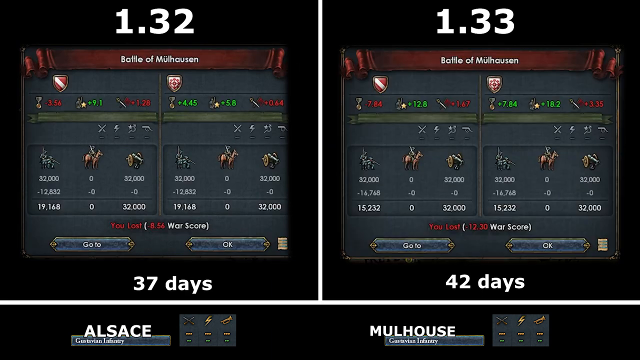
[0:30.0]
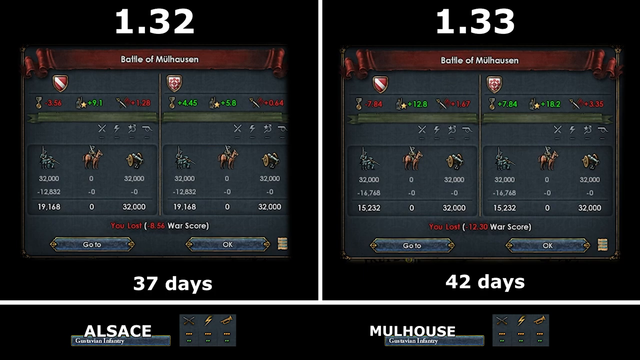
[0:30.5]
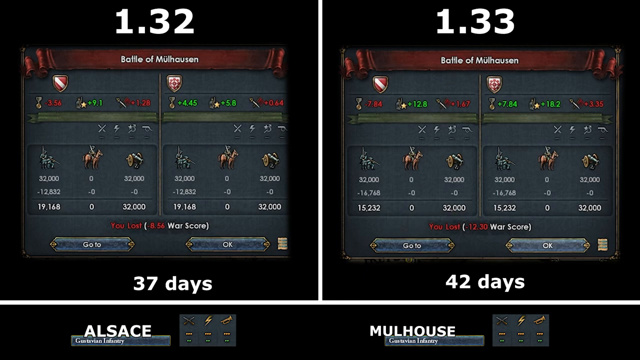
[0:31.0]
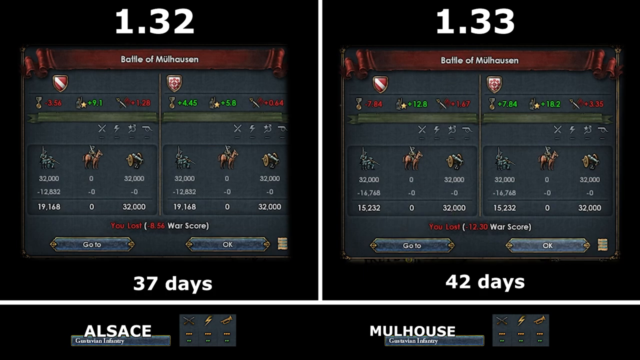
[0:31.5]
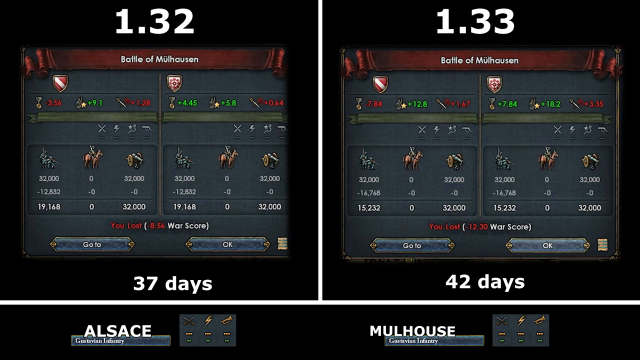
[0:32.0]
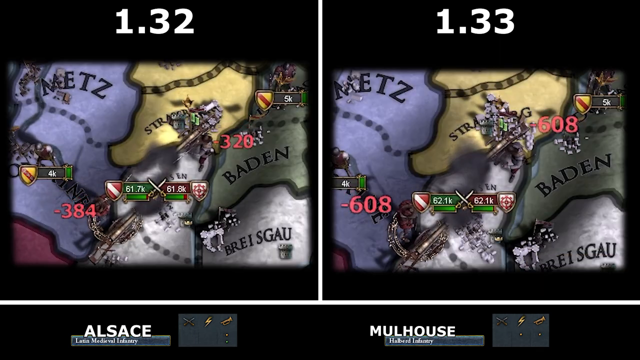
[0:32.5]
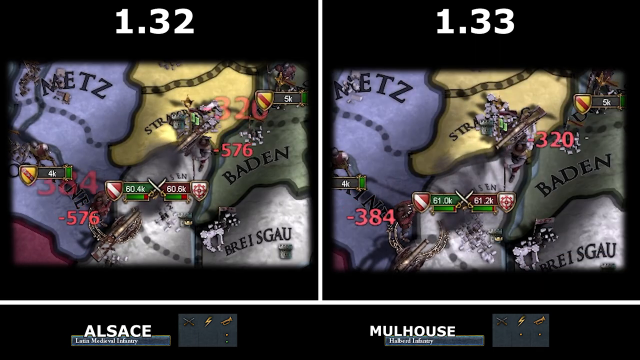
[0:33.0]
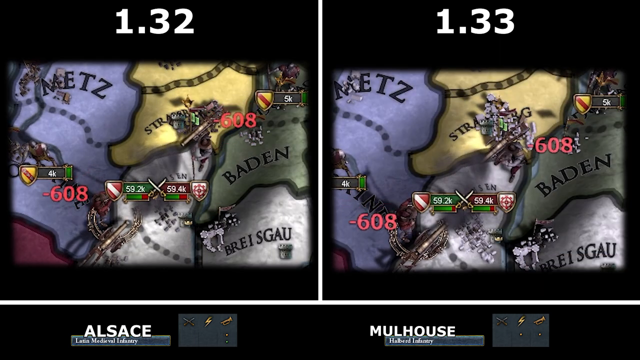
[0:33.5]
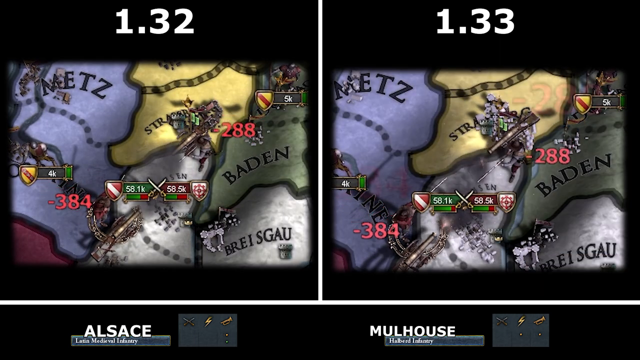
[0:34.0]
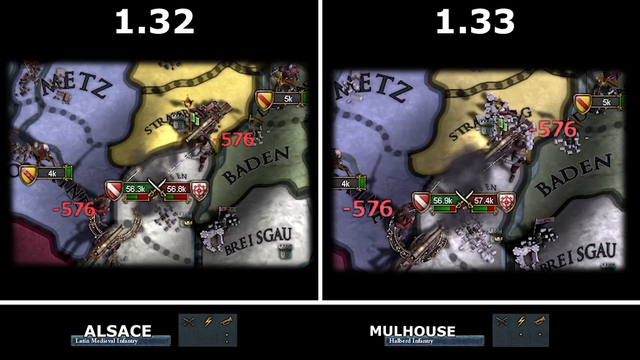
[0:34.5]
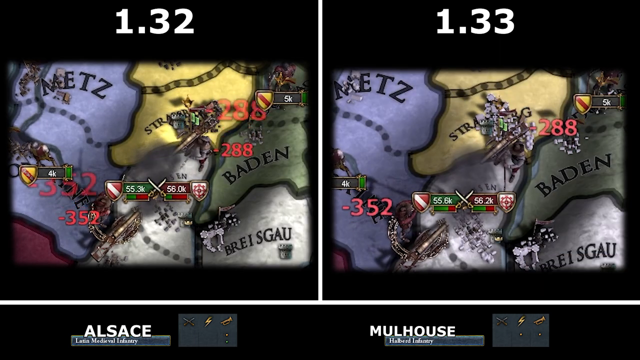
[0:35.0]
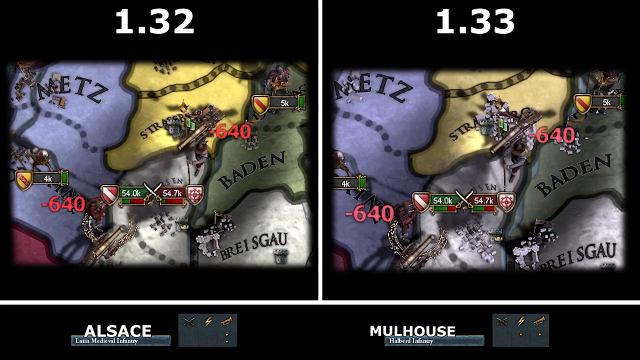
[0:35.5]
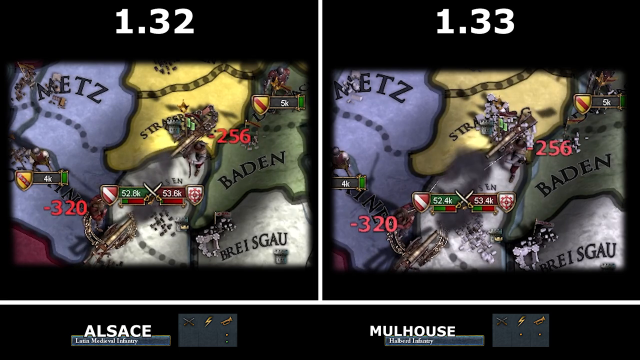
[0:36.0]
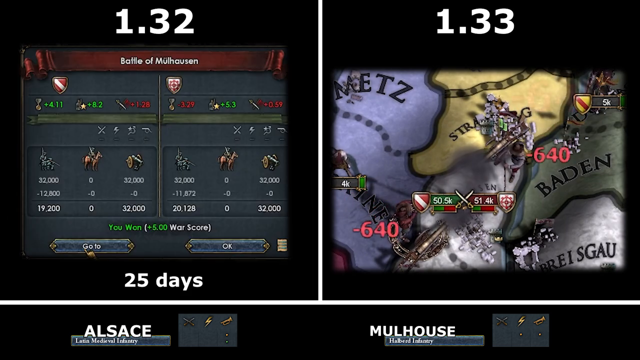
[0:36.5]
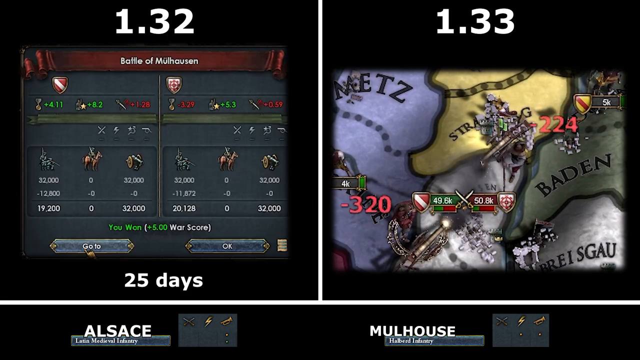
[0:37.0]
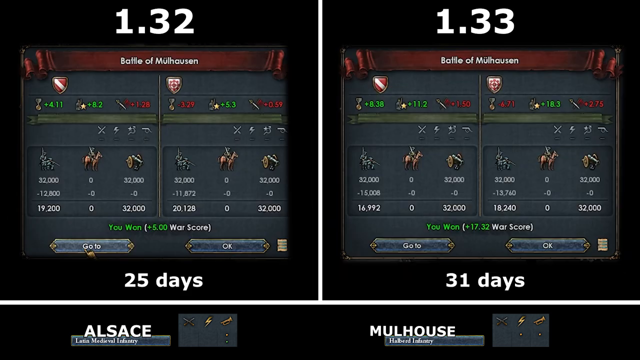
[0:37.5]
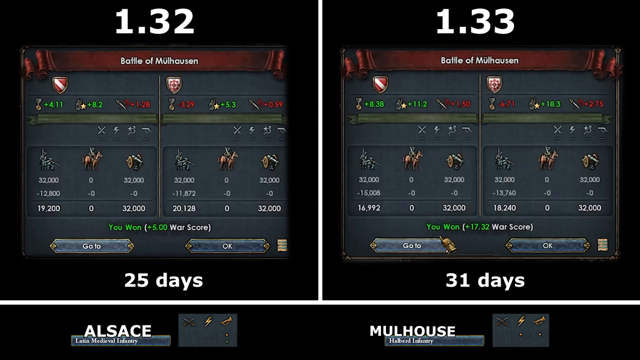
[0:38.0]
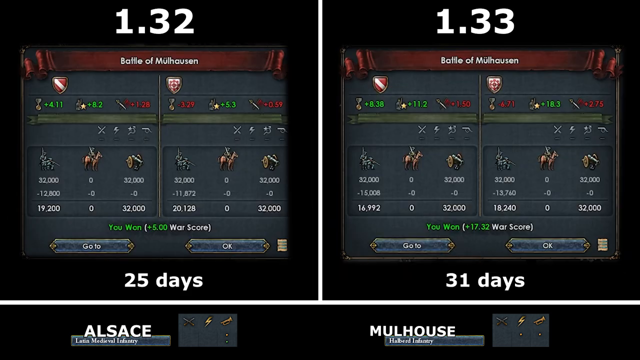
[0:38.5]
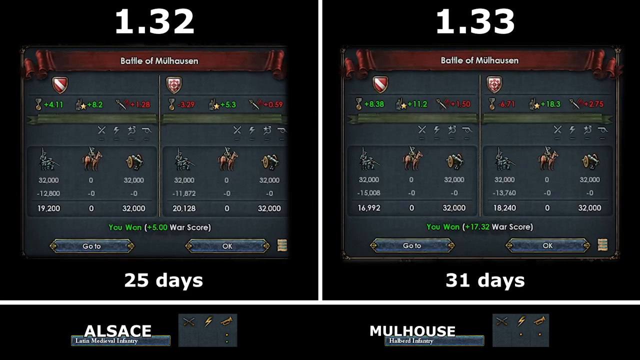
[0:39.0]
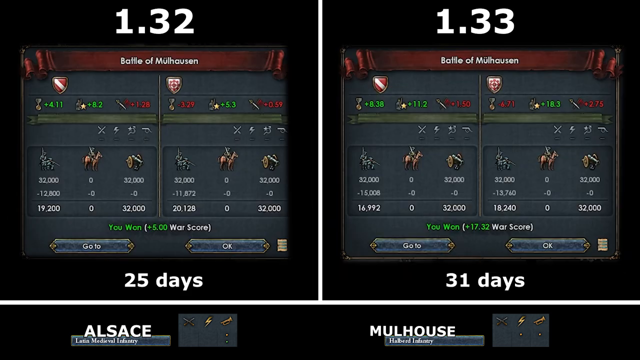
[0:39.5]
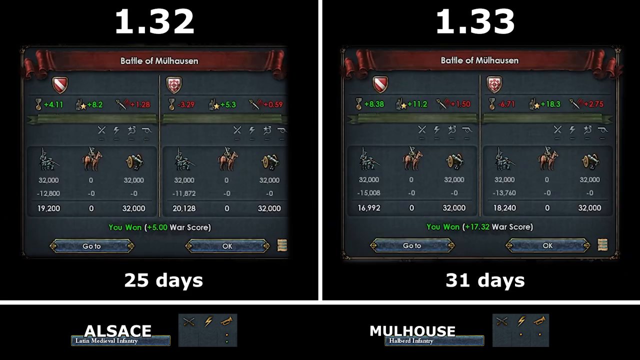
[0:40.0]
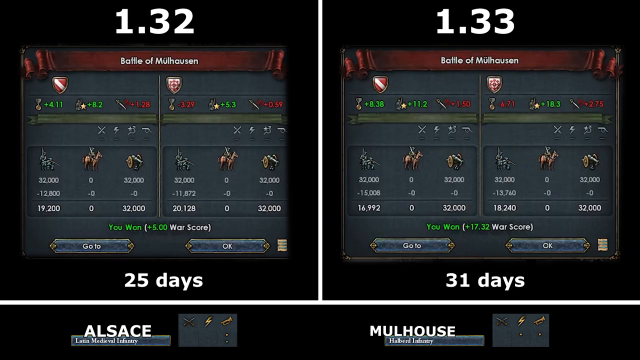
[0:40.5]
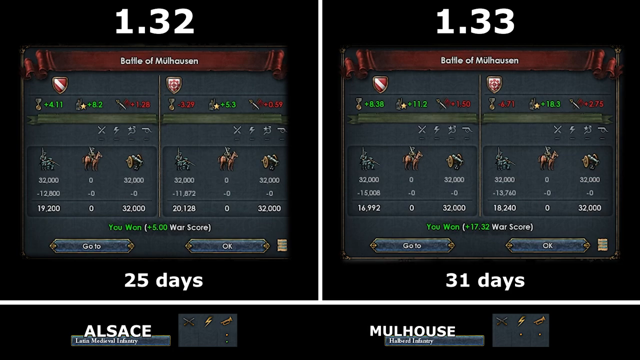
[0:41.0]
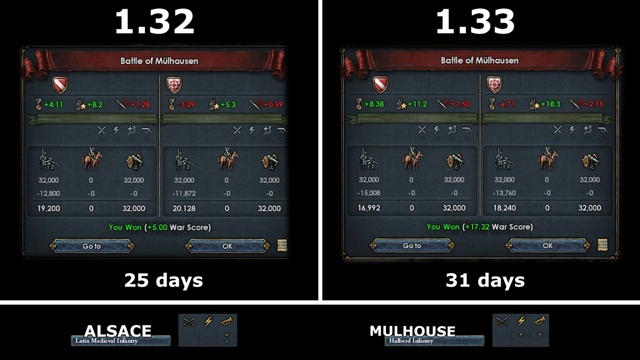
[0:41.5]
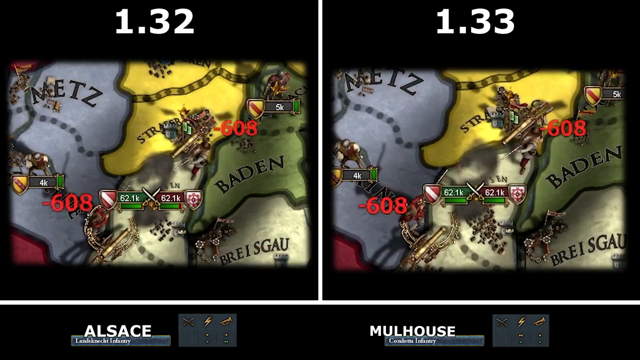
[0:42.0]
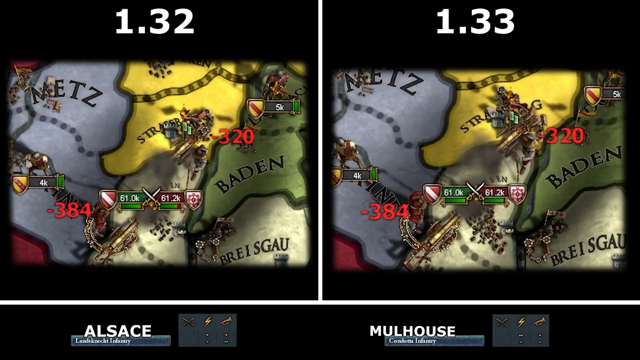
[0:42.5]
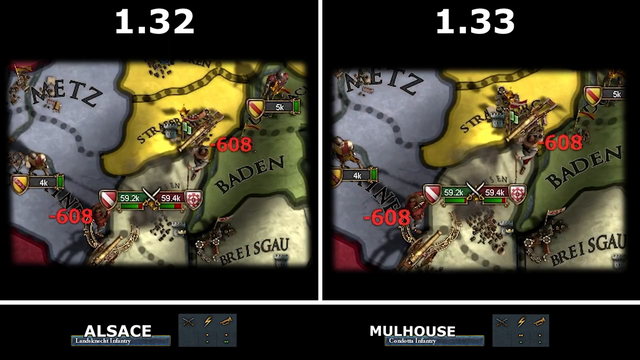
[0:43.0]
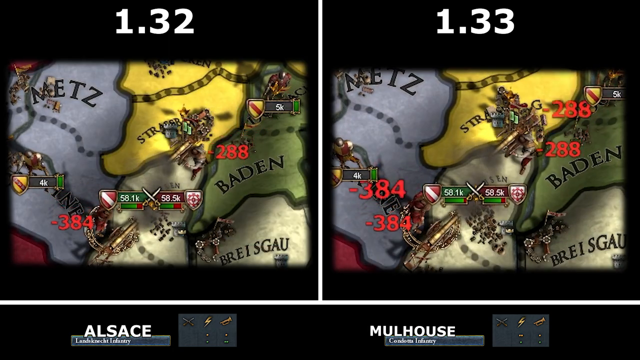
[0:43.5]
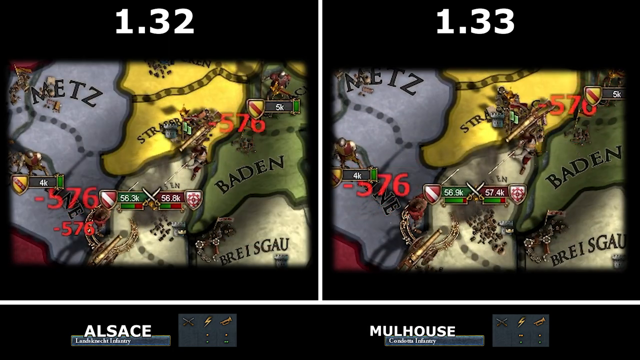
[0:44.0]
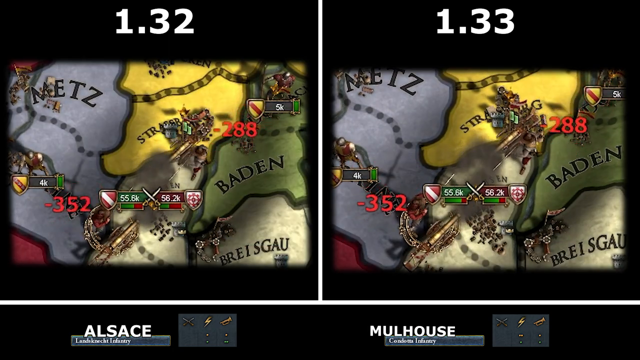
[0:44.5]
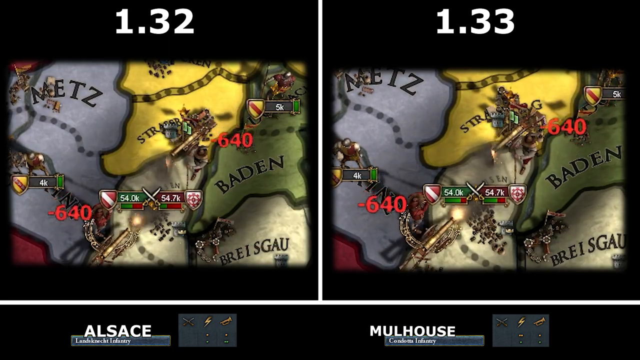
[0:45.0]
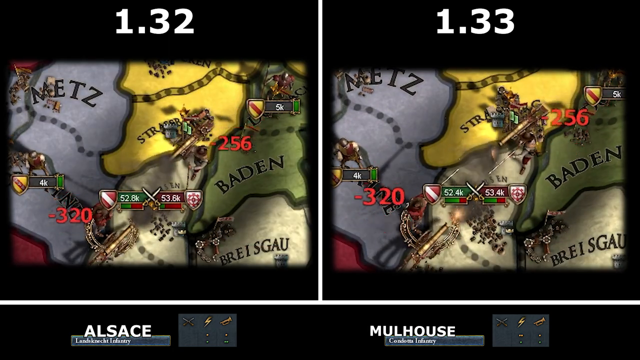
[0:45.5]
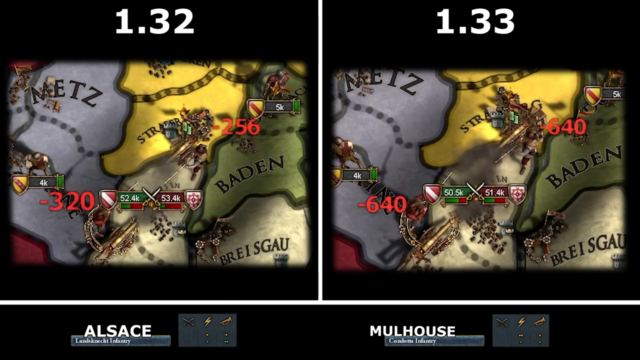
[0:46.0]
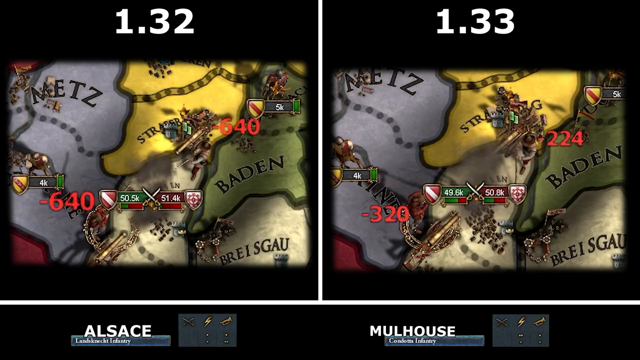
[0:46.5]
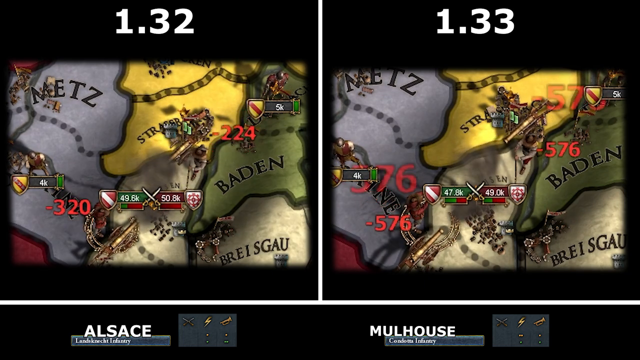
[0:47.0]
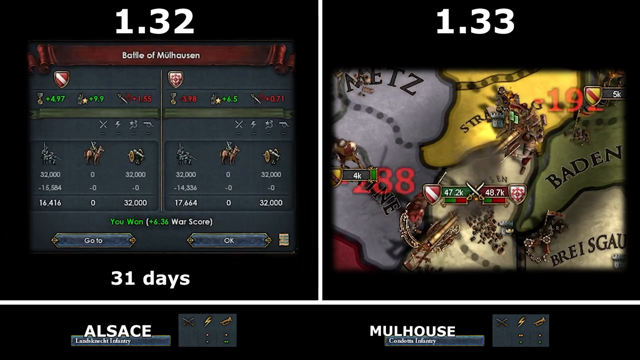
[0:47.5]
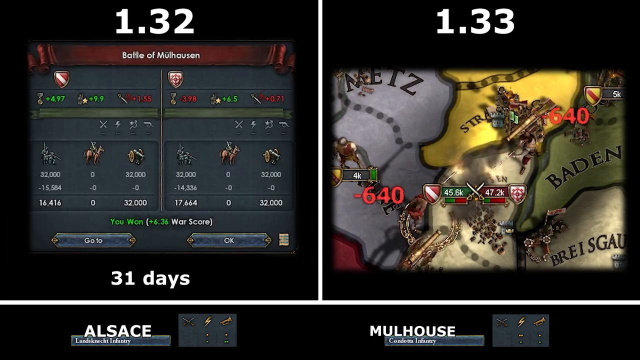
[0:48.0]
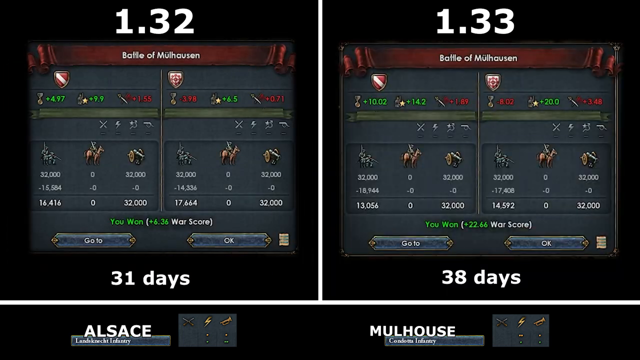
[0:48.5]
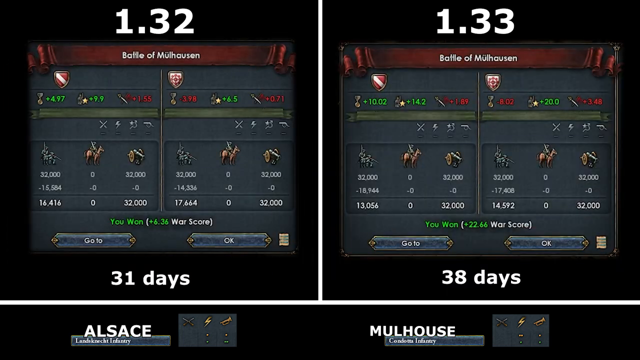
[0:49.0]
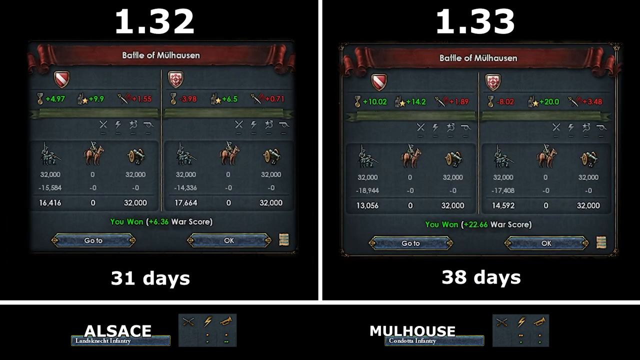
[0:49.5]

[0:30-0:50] Text also runs along the bottom of the screen: "Alsace" on the left and "Mulhouse" on the right. The view returns to the overhead maps with action and numbers flying around on both screens. Then the left side goes back to the menu, followed by the right side; these screens seem to include different stats. The left one reads "25 days" underneath and the right one "31 days." The maps return, followed by the stats again, this time reading "31 days" on the left and "38 days" on the right. The video seems to compare how well the player is doing over different days of gameplay, and the map parts seem to show some of the gameplay.